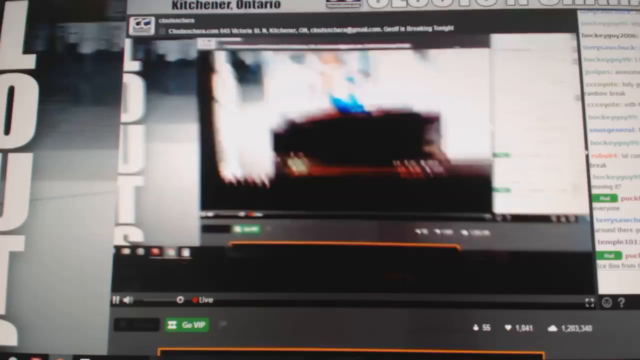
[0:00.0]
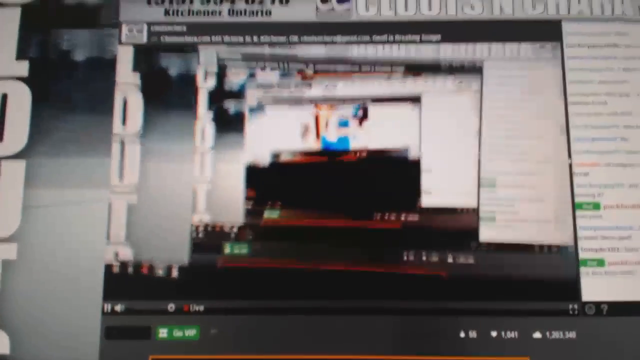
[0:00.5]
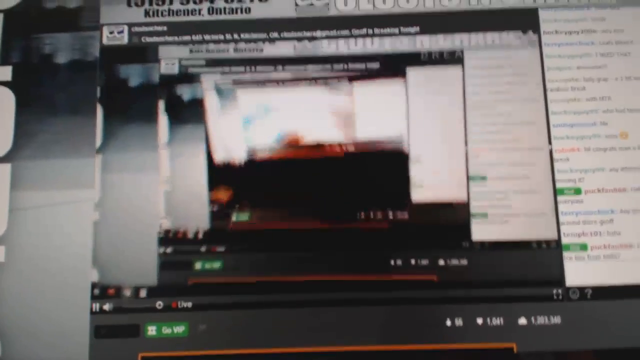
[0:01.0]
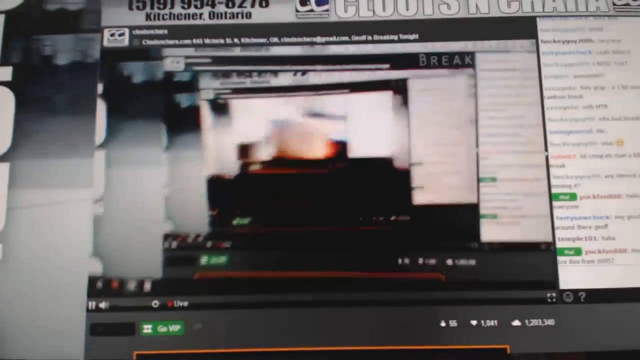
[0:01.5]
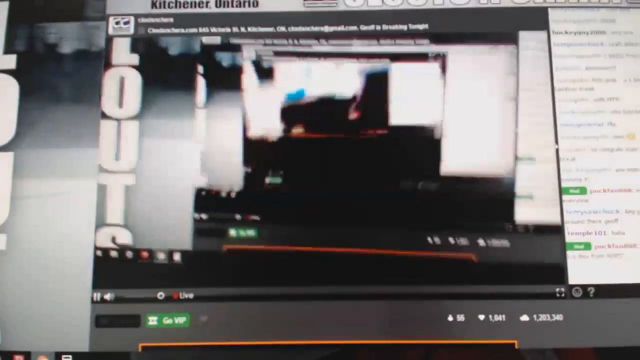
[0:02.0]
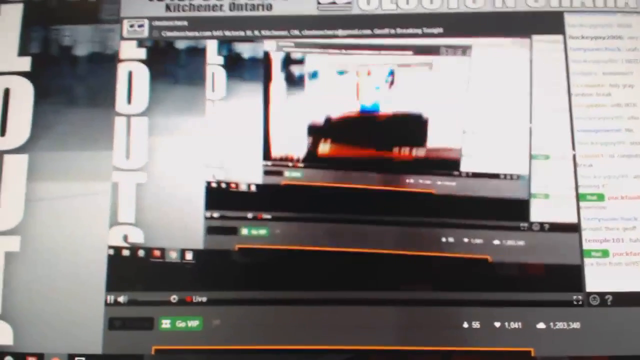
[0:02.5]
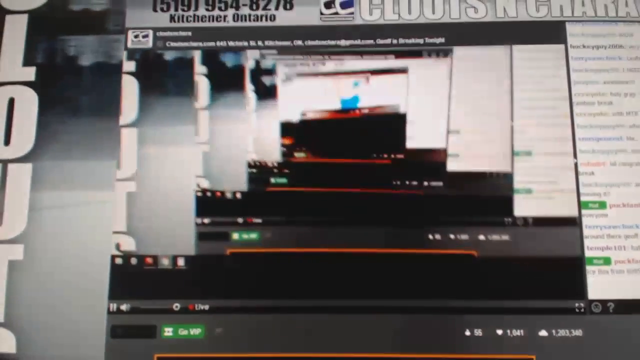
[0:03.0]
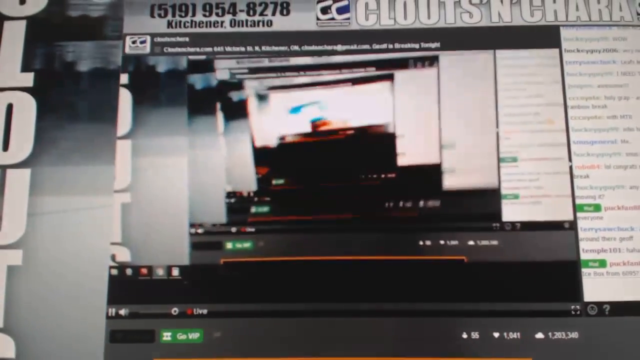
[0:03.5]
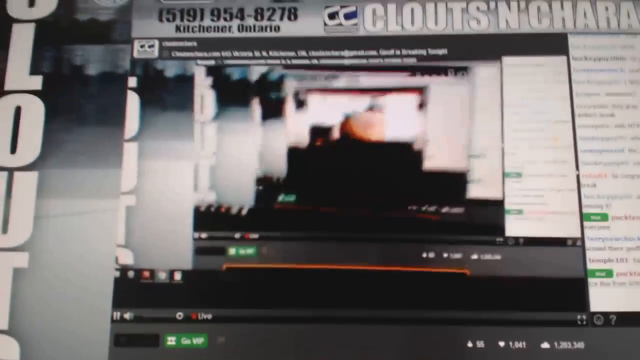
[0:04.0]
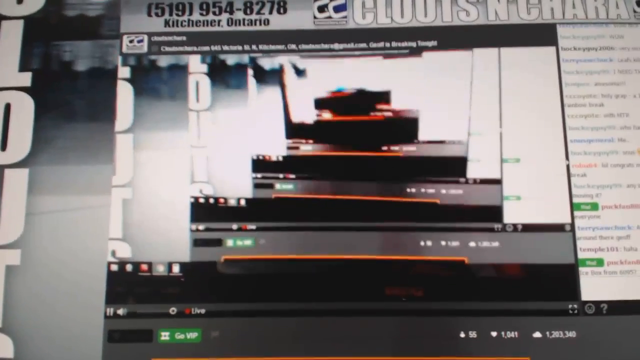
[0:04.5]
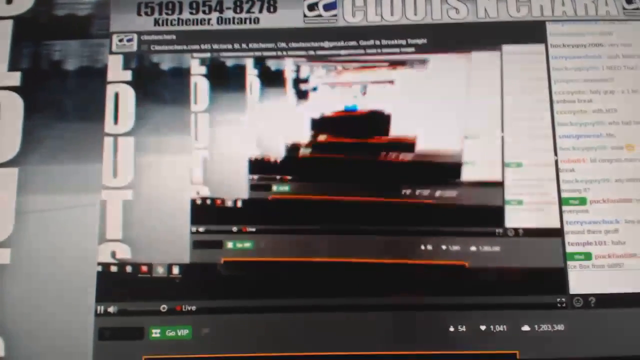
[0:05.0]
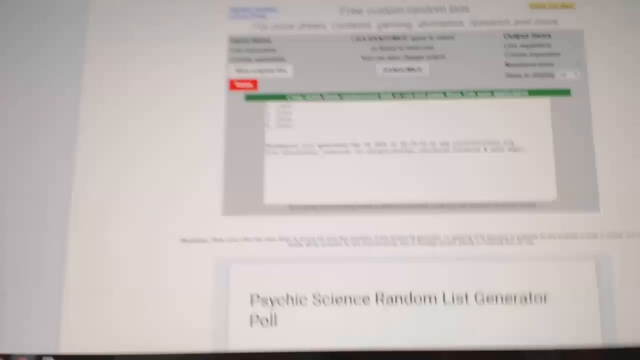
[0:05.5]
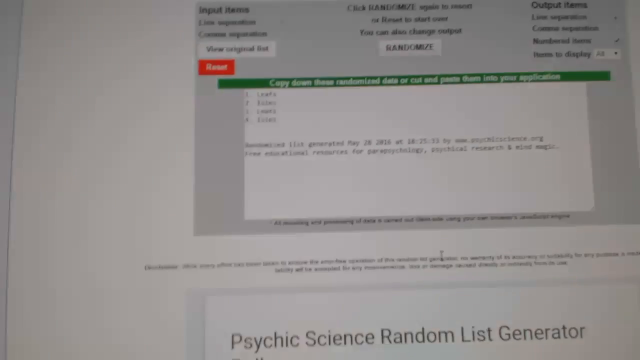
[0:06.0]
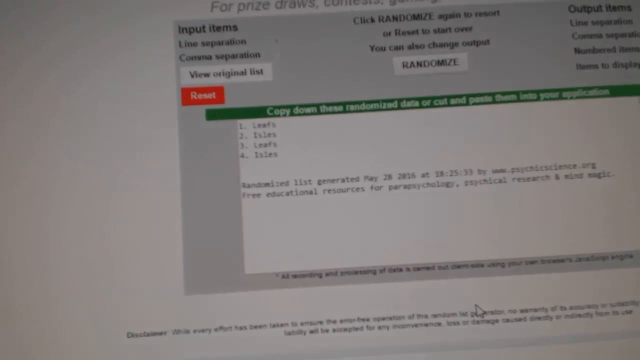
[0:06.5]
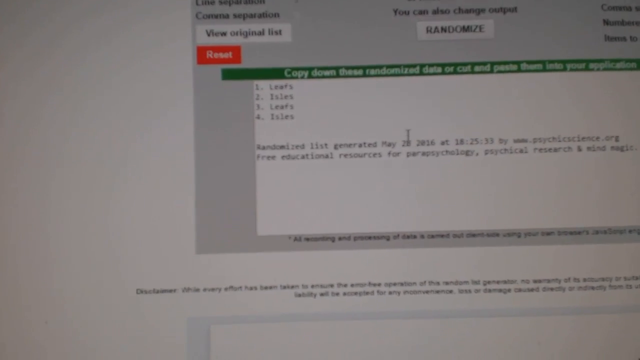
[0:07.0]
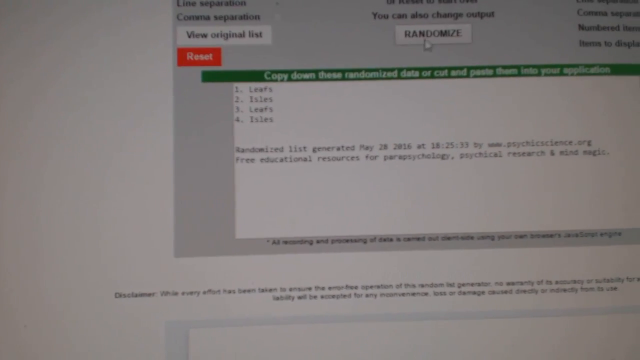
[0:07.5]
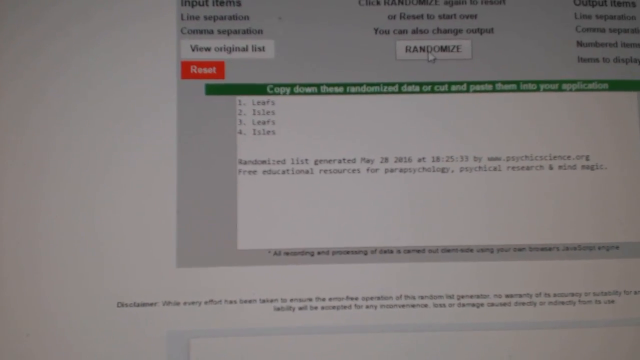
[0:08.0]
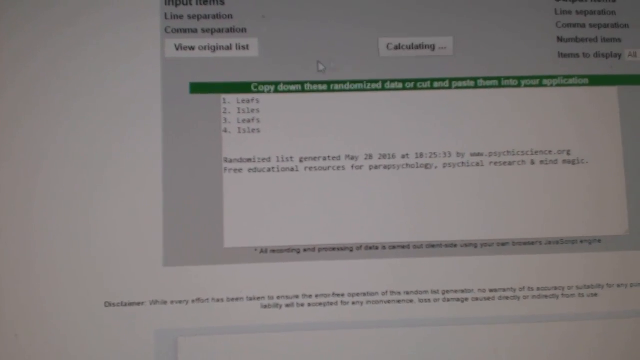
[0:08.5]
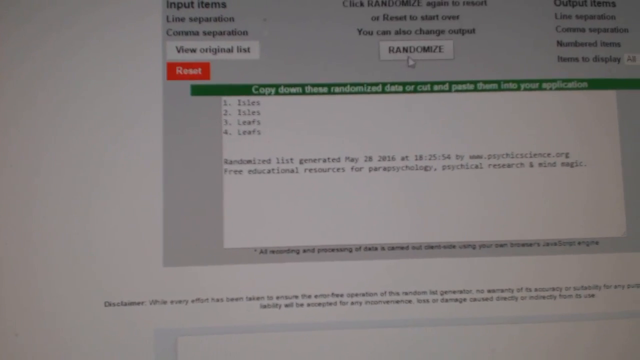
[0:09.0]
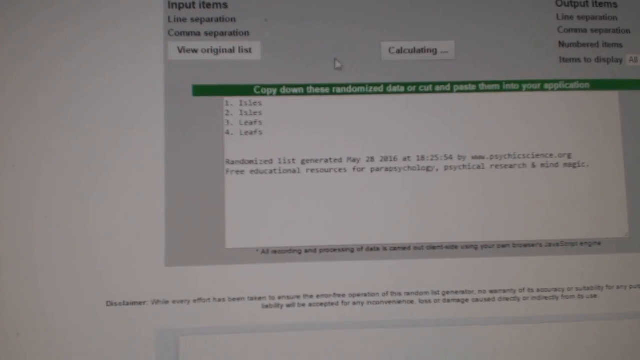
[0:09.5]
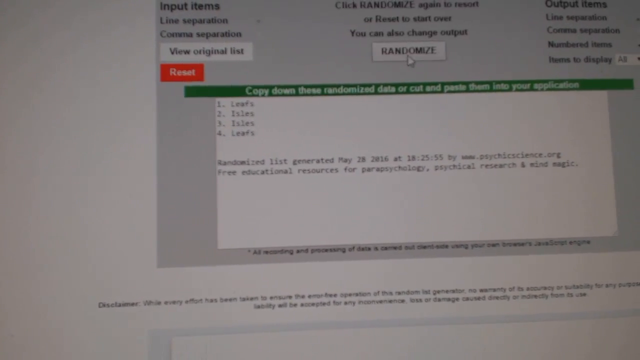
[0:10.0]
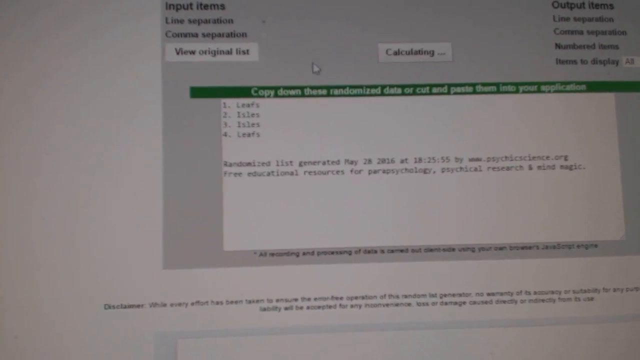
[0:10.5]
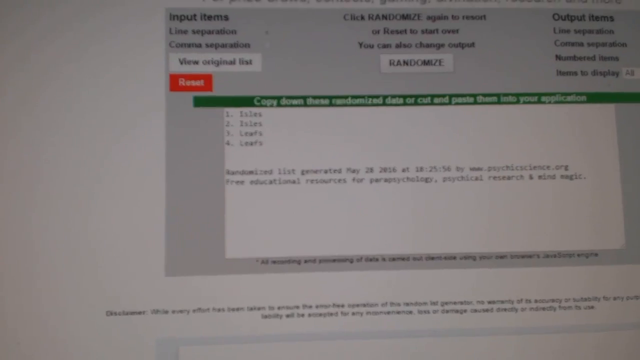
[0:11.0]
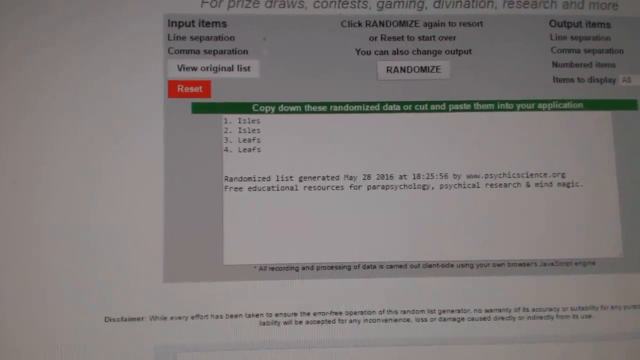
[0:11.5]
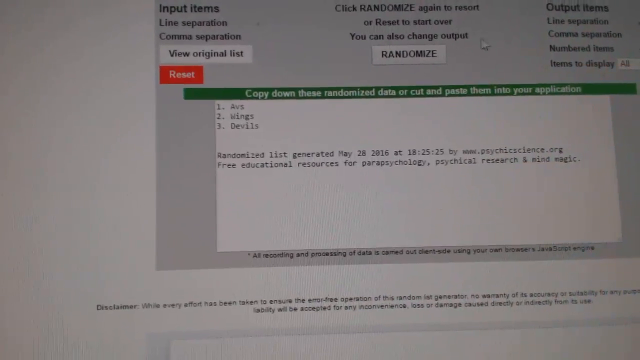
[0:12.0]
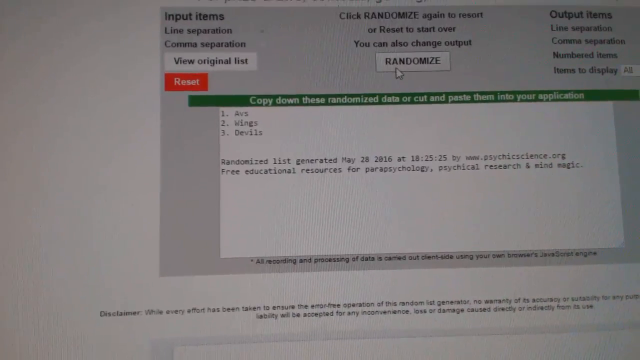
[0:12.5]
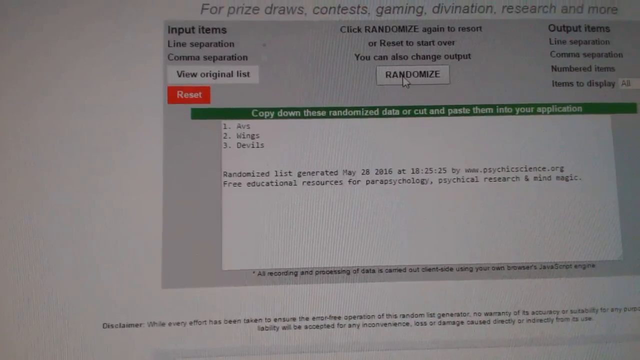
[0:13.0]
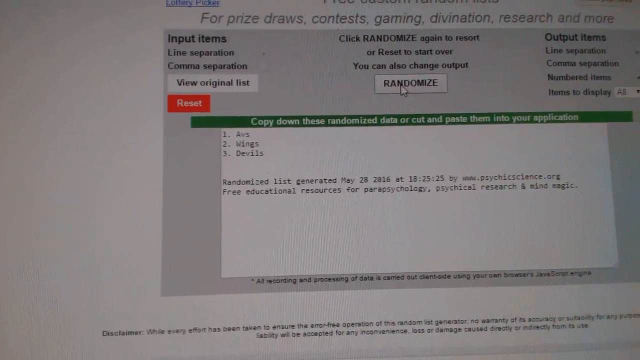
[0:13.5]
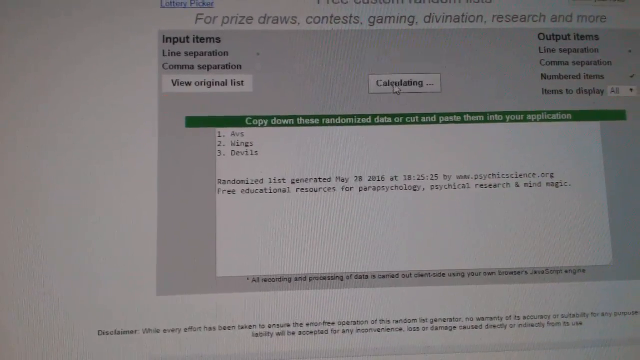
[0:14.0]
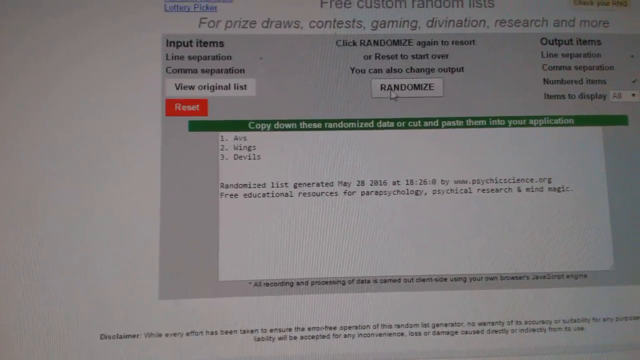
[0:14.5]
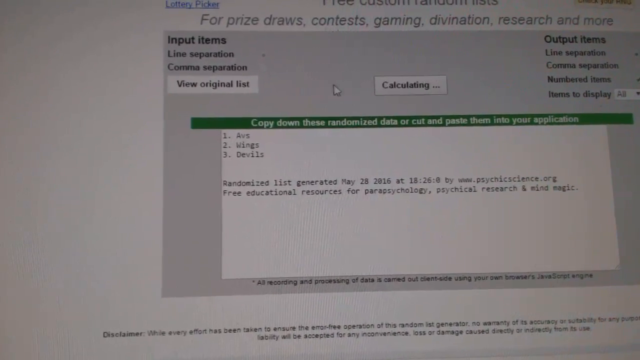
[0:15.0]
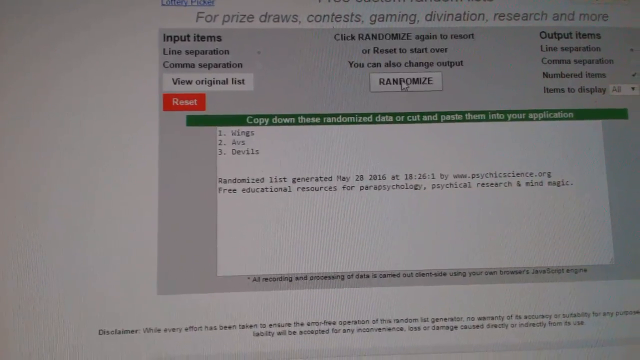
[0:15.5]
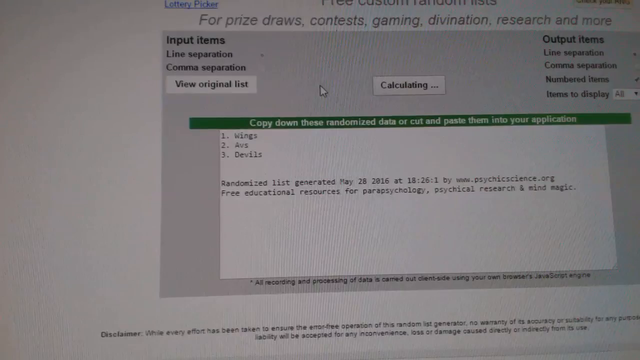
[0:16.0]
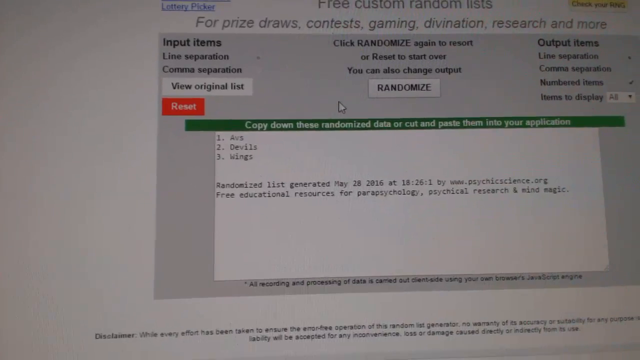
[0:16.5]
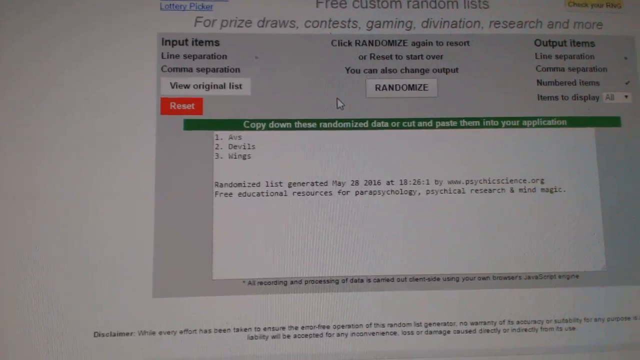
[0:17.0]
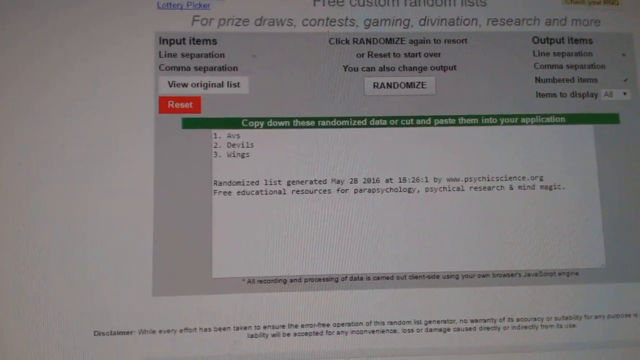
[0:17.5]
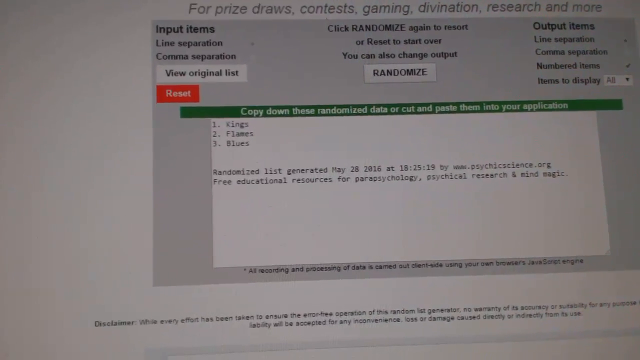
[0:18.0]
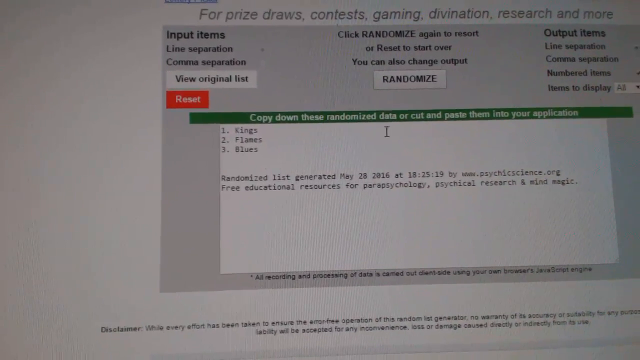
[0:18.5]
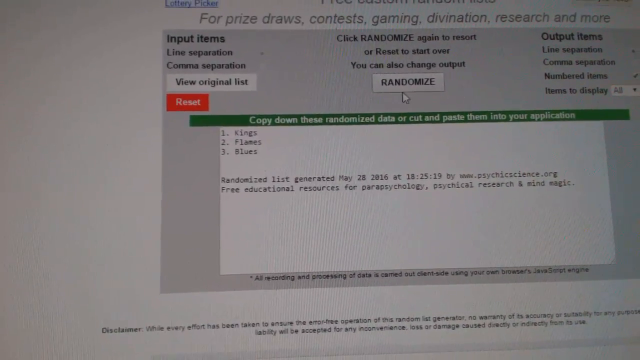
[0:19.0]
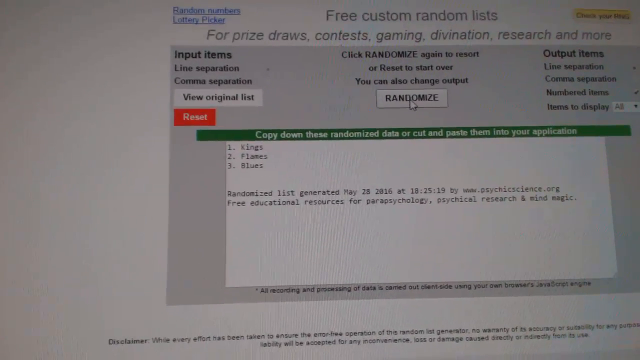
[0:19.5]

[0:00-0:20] A phone is apparently being used to record a screen whose browser is recording itself, creating nested screens within screens, about four of them. The last one is quite small, and the low-quality camera makes it look very blurry and white. At the top of this camera view is a website called Kitchener Ontario with a phone number beginning 519-954, the remaining digits apparently six or eight, two, seven, six or eight. To the right is a black and blue rectangle, black on the left and blue on the right, and to the right of that are more words that seem to read "clouds and characters," with the second word partially cut off. The view then changes to a different, zoomed-in screen. On the left is a title reading "input items," below it "line separation," then "comma separation," then a white button reading "view original link," and below that a red button that says "reload." Below that is the main text area. Above it, a thin green line carries text that apparently says to cut and paste them into your application. A numbered list of four items seems to read "leaf," "life," "leaves," and "litter," followed by blurry text that seems to say the randomized list was generated on May or March 20, 2010, at what seems to be 1825-33, by a science.org website, with some text before "science" too blurry to read, plus a line about free educational resources from other websites that is also too blurry. The mouse moves over and clicks a button called "Randomize." The screen says "Calculating," and something changes, though it is unclear what. Randomize is clicked again. Above, there seems to be text saying "for prize draws, contests, gaming, divination, research, and more." After another click, the number of items changes to three: "Air," "Wings," and "Devils." The printed message is now clearer and reads "May 28, 2016 at 182525 by www.psychicscience.org. Free educational resources for parapsychology, psychical research, and mind magic," with a small disclaimer at the bottom. After a few more clicks on Randomize, the words become "Kings," "Flames," and "Blues."